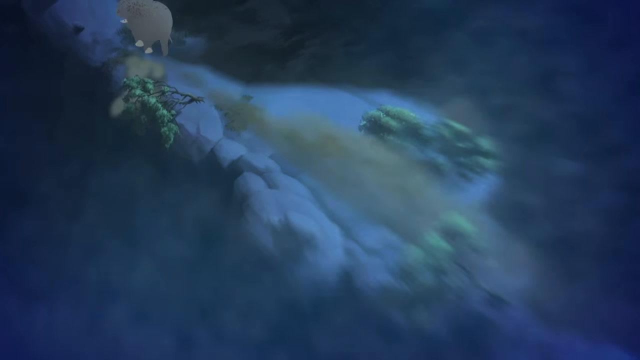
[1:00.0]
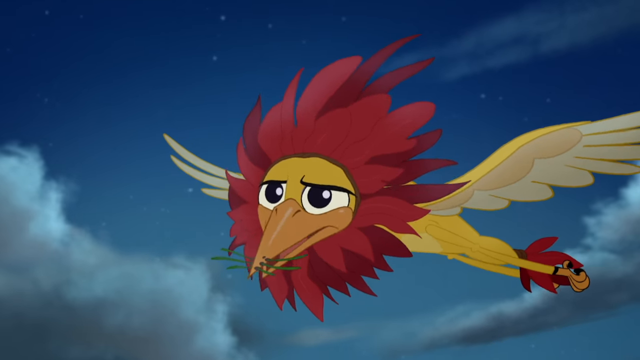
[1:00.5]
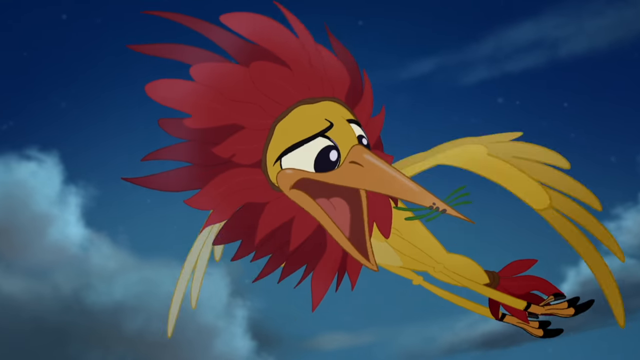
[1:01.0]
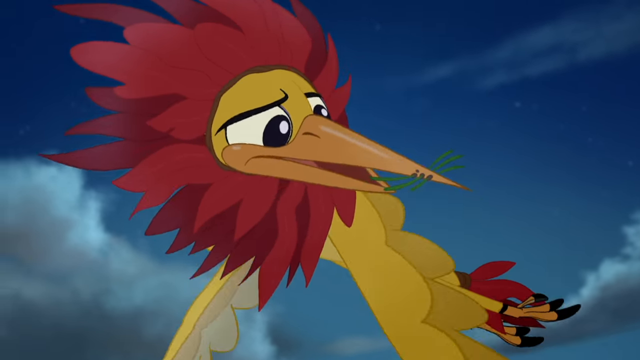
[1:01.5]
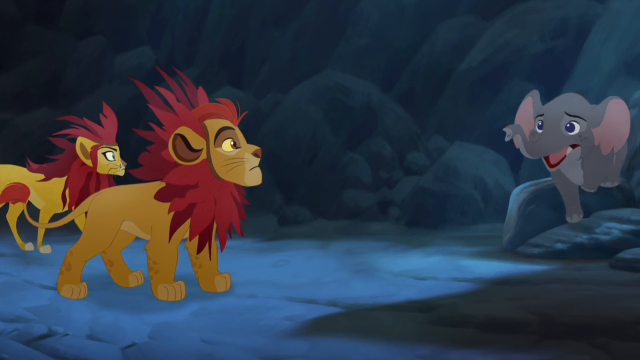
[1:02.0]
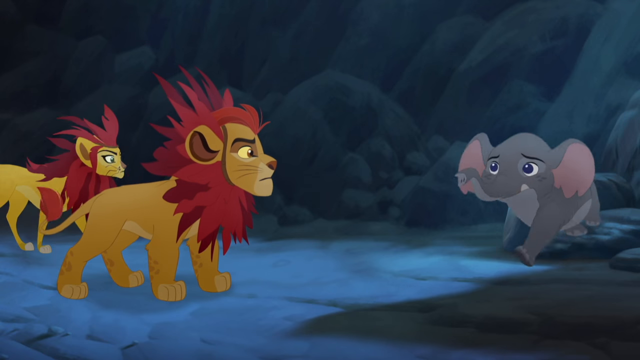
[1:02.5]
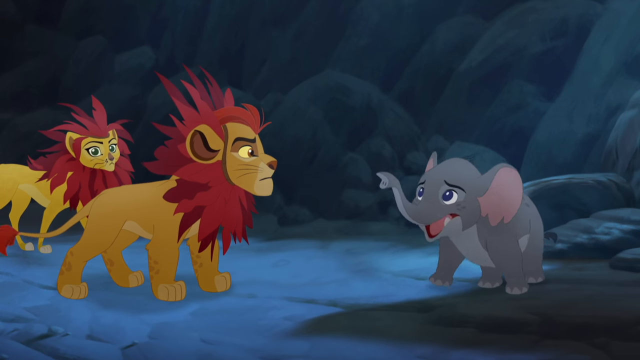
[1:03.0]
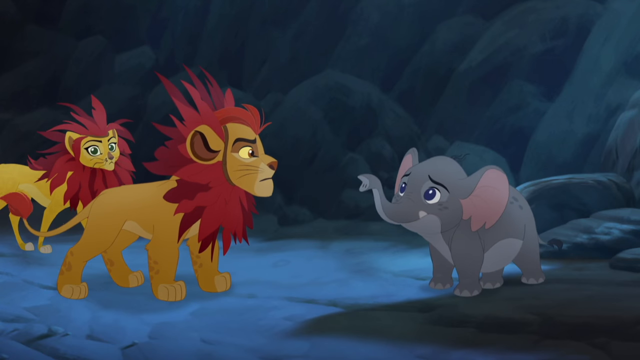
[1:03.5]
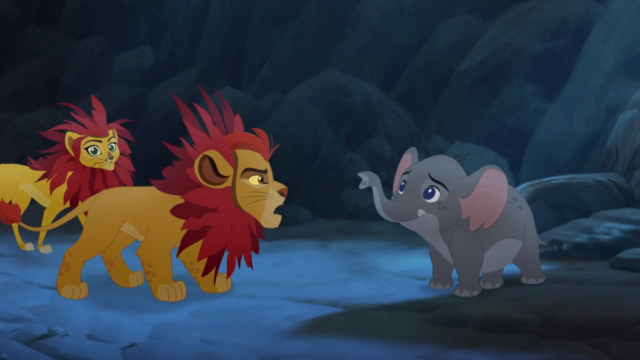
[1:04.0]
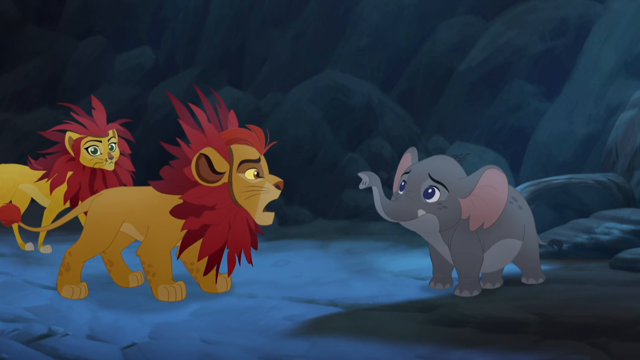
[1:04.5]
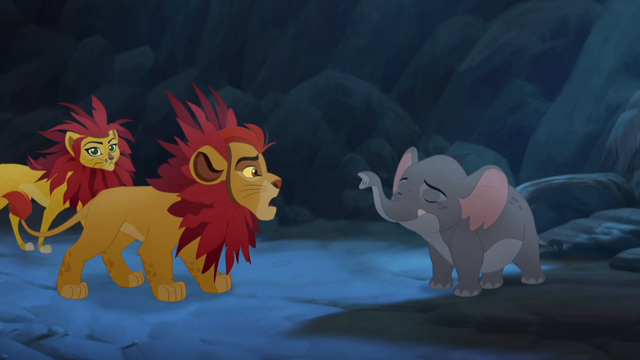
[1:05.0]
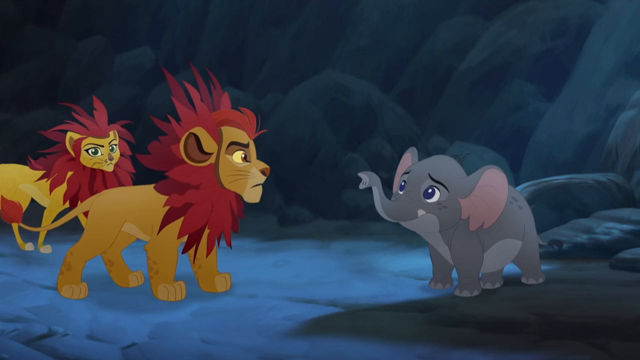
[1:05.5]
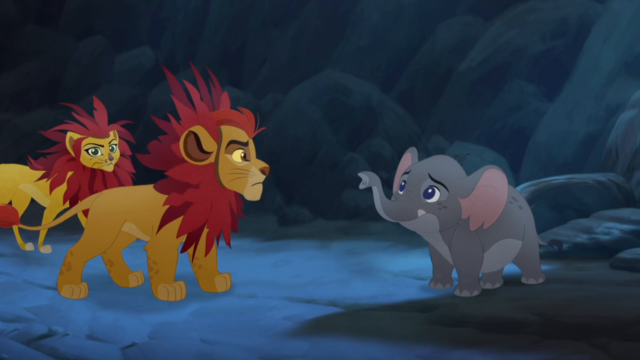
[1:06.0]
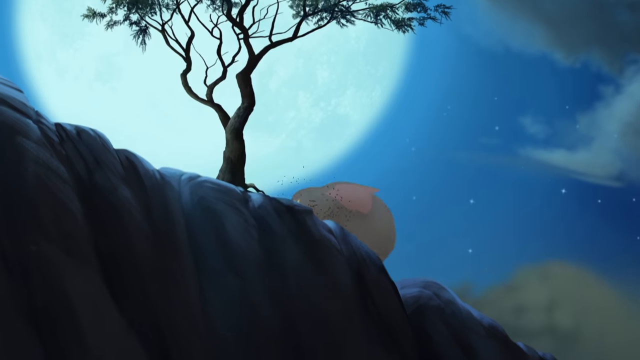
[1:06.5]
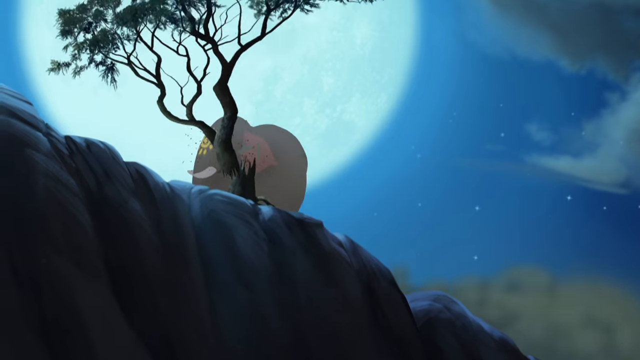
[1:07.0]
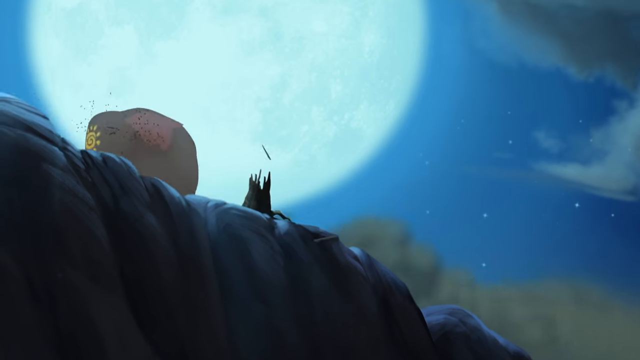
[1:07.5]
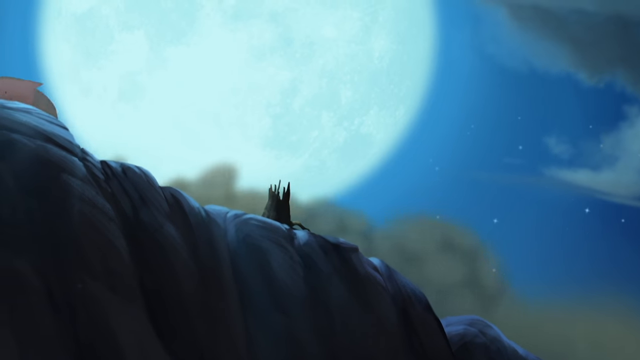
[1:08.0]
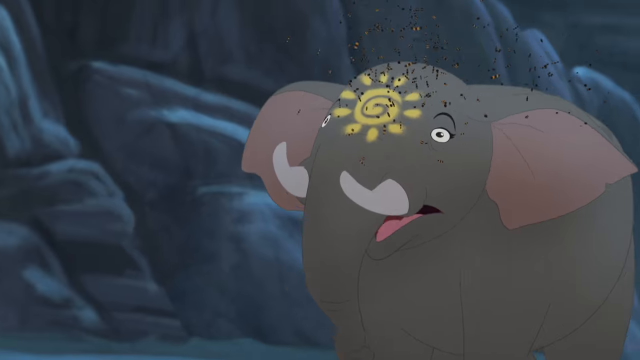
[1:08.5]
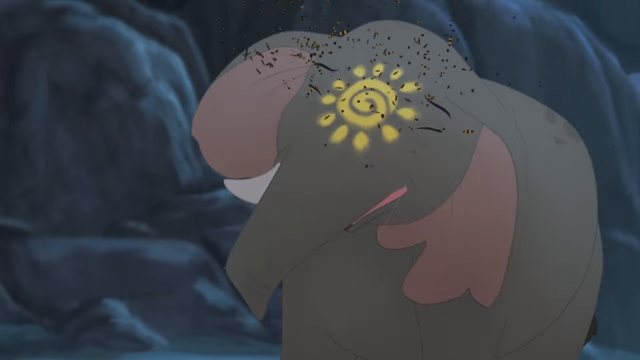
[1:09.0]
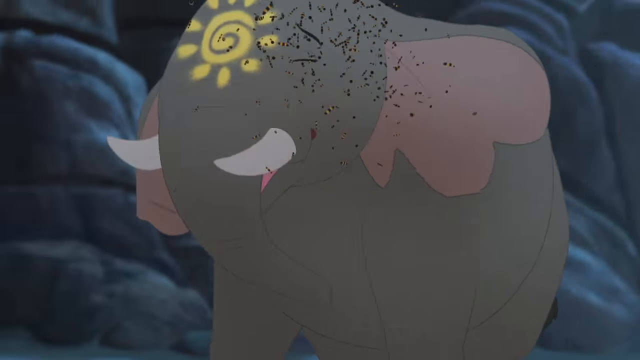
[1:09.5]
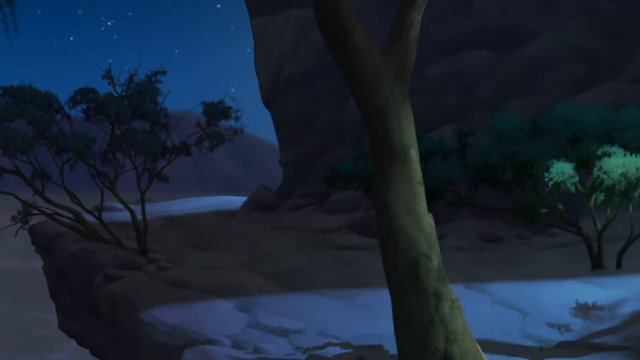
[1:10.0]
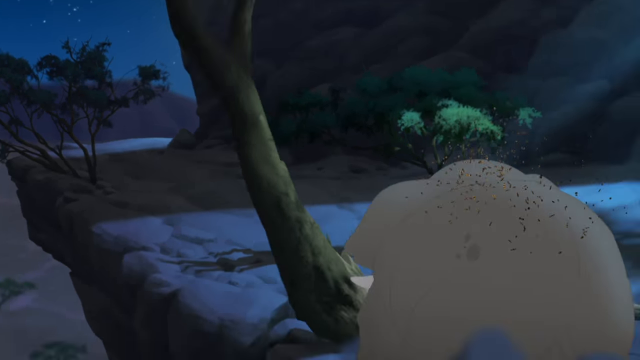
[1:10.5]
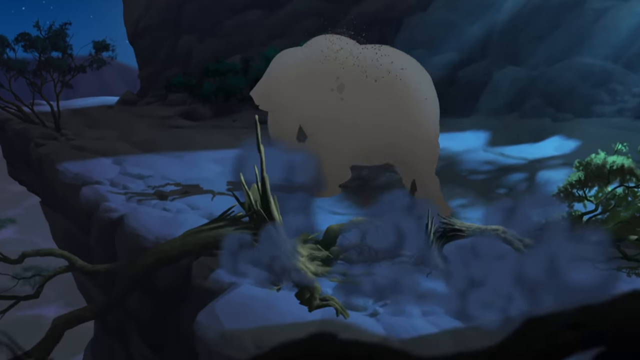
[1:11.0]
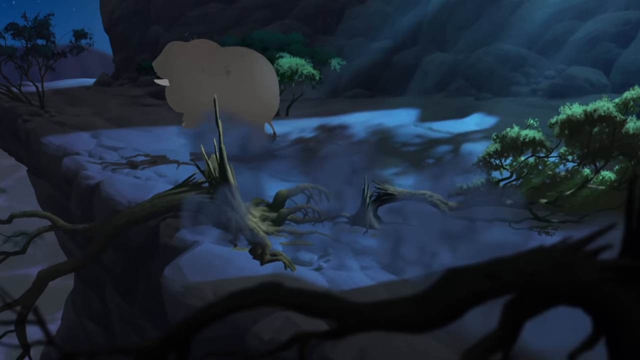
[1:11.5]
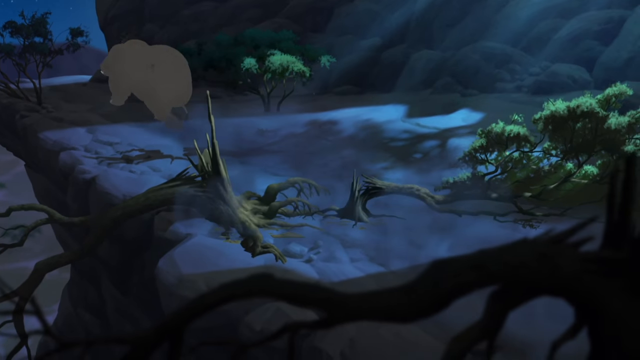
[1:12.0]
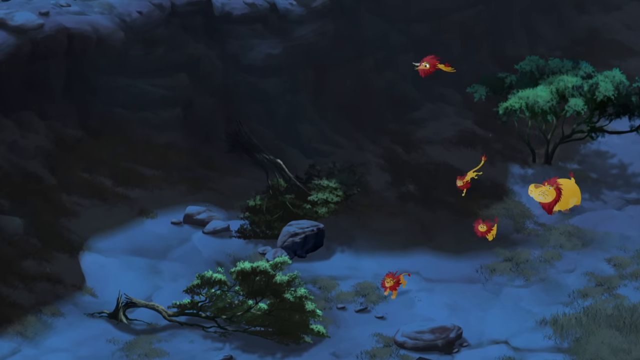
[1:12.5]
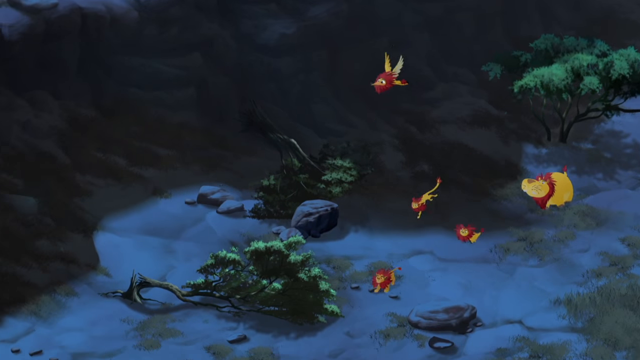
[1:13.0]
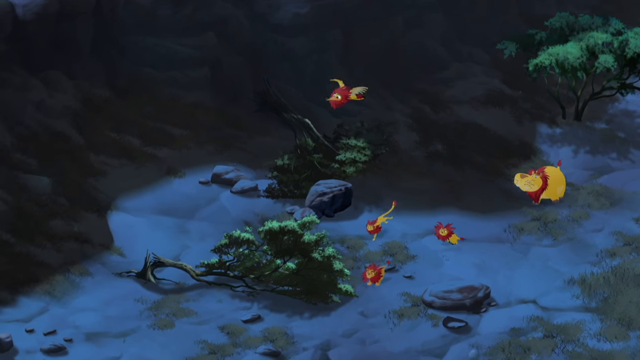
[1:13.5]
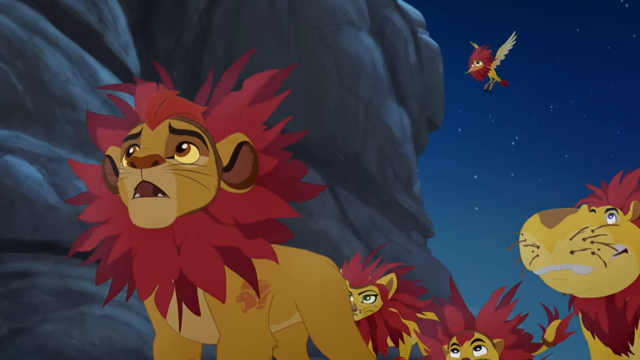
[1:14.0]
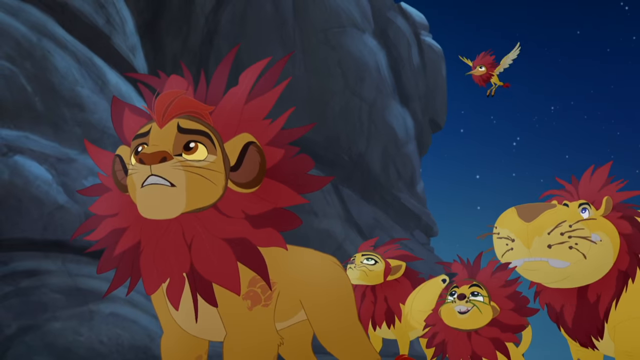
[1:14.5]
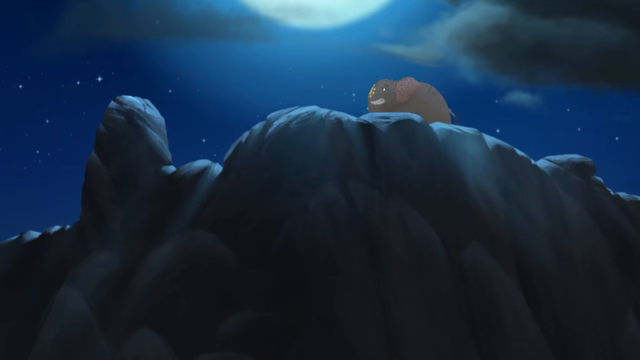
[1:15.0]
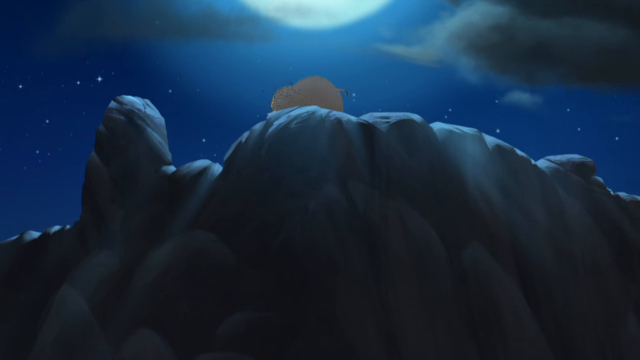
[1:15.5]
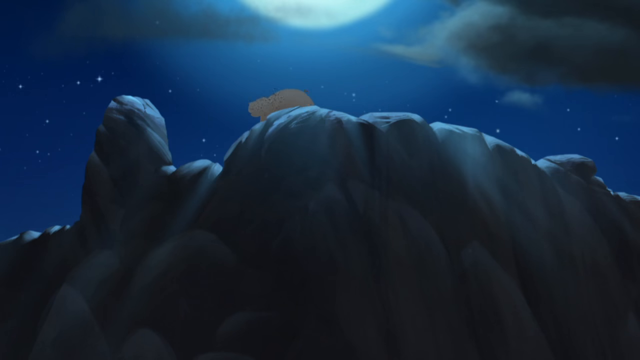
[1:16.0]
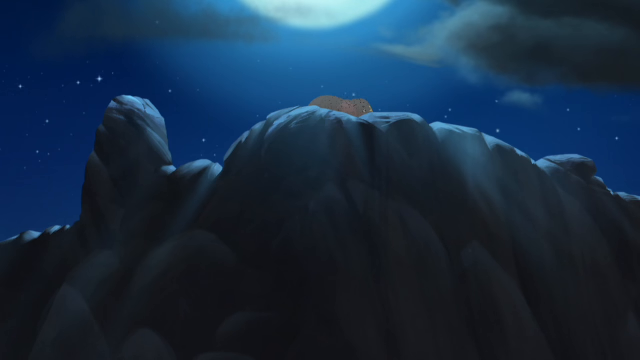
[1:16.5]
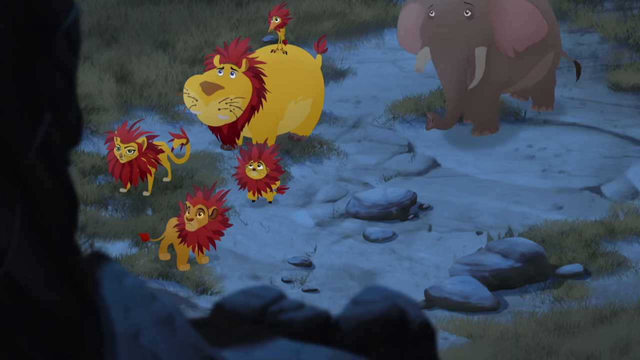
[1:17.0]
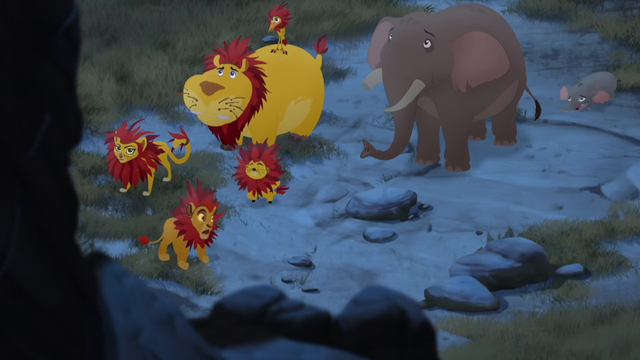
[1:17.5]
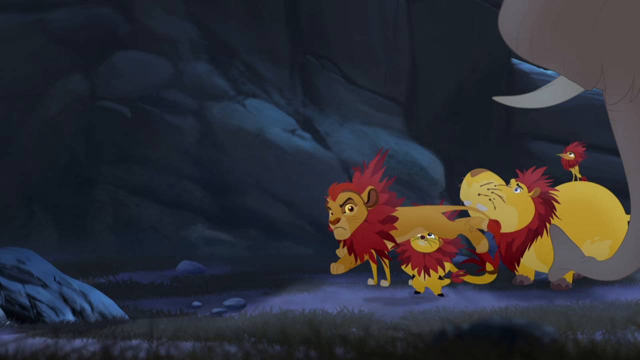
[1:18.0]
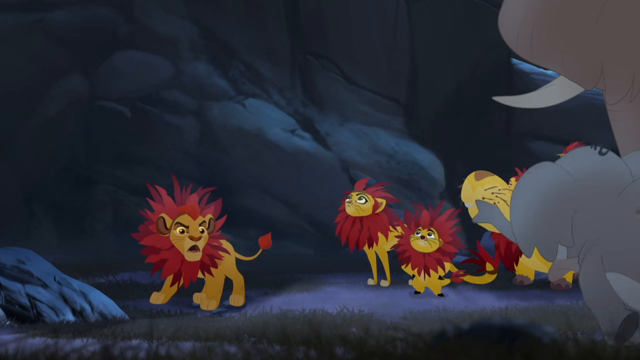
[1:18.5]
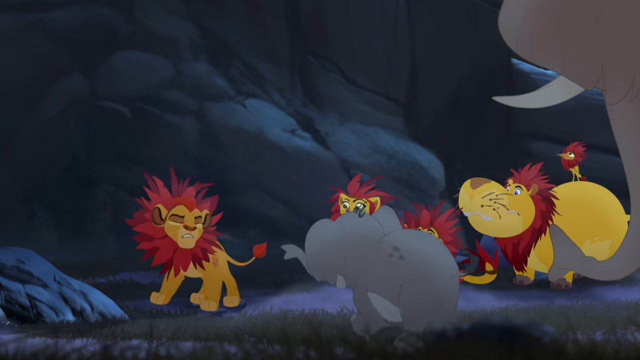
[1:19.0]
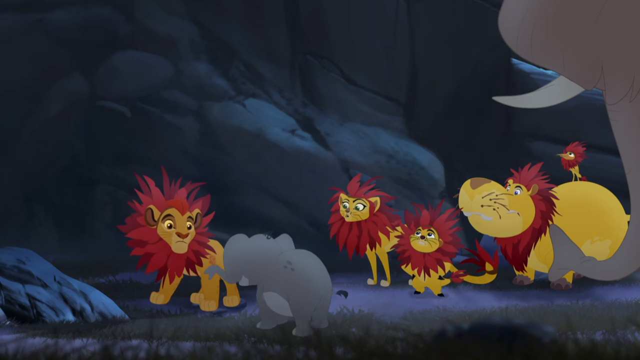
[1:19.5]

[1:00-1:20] A cartoonish-looking bird has yellow feathers except for red feathers around its head and on the end of its tail, and beady black eyes. The view changes to two lions on the left side of the screen, with yellow fur, red manes and red tips on their tails. A baby elephant on the right side of the screen has gray skin, pink insides of its ears and blue eyes. The baby elephant talks to the male lion, and then the male lion talks. The scene shows the top of a rocky hill or plateau, where a big elephant runs across and knocks down a tree. It has some kind of yellow sun symbol on the front of its head or above its trunk, and a moon is visible in the background. A bunch of little black specks, probably gnats or flies, fly around the elephant's head. It runs into another tree and knocks it over.